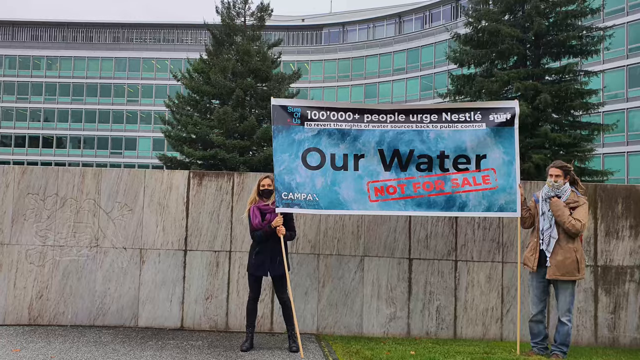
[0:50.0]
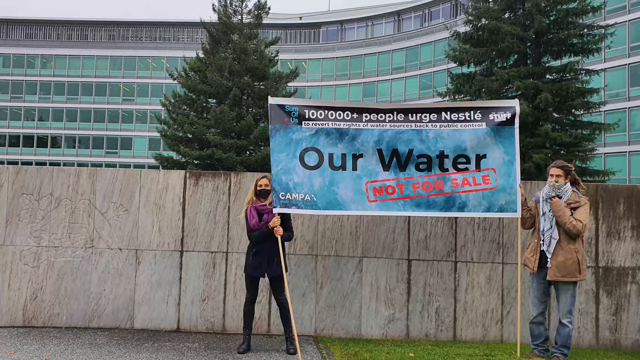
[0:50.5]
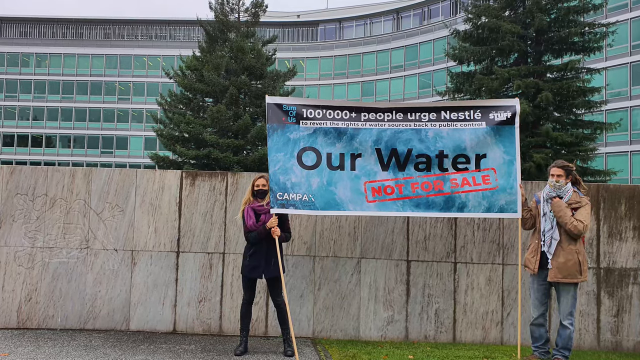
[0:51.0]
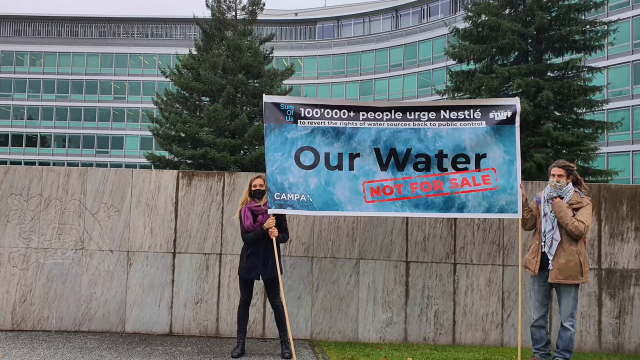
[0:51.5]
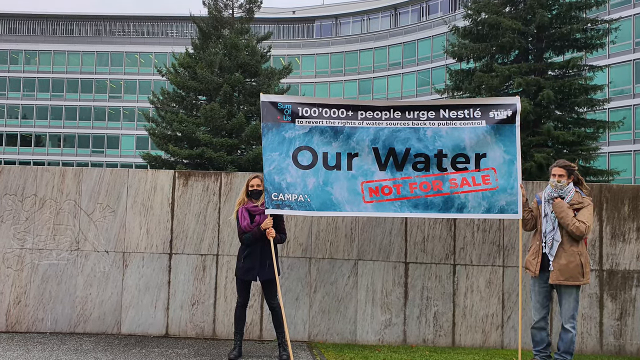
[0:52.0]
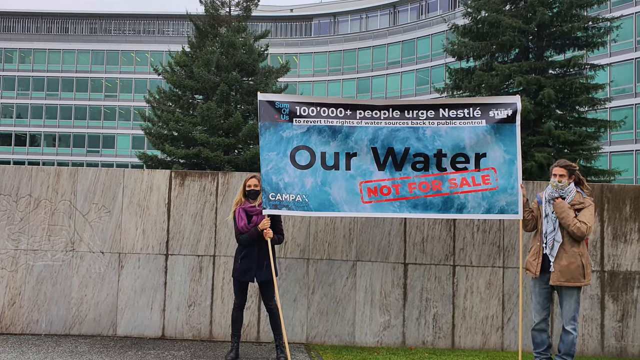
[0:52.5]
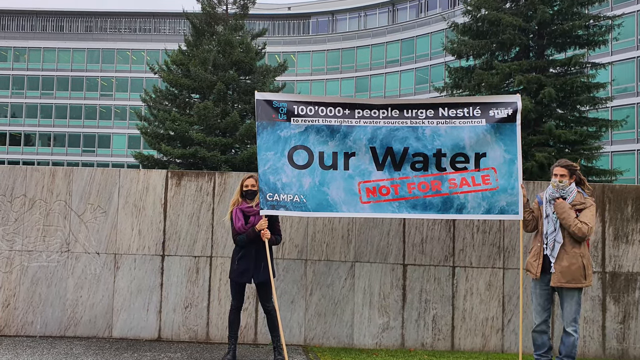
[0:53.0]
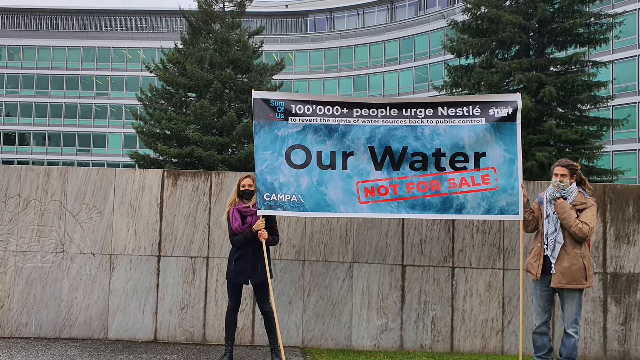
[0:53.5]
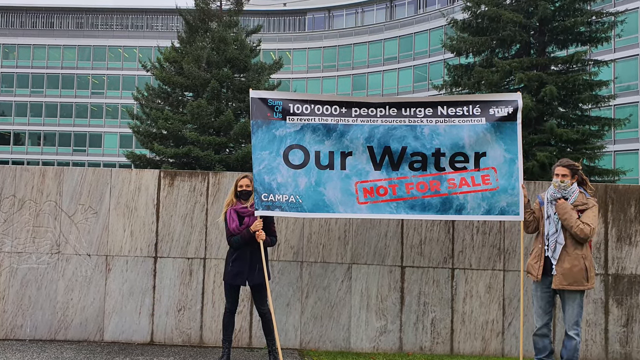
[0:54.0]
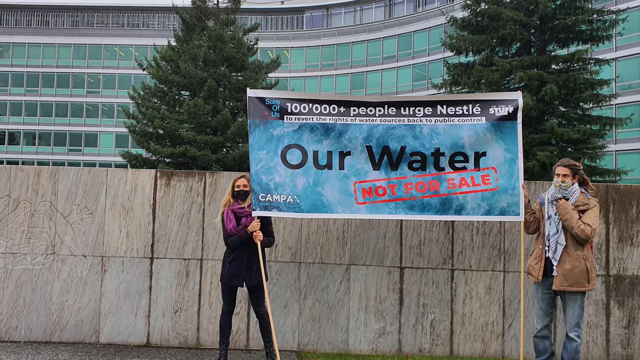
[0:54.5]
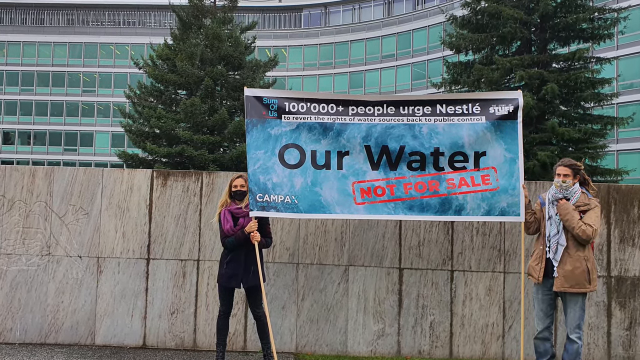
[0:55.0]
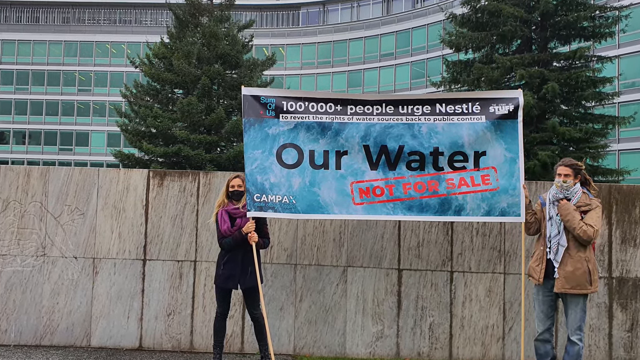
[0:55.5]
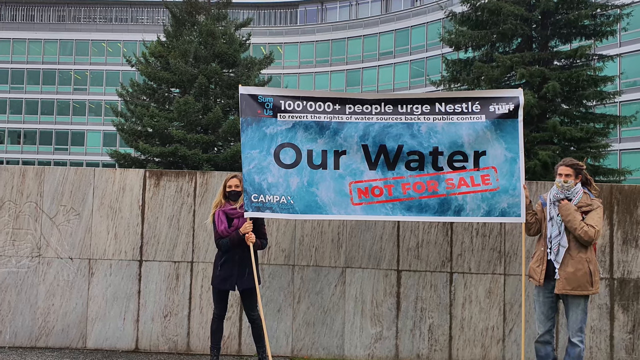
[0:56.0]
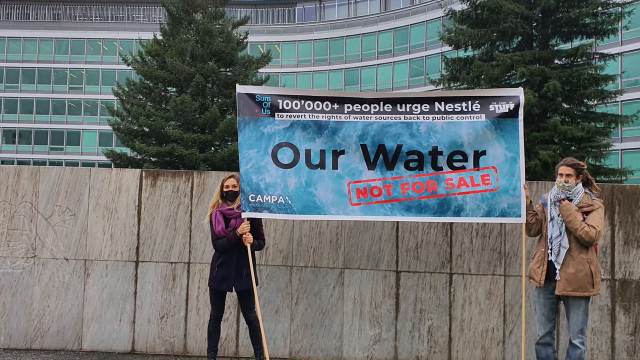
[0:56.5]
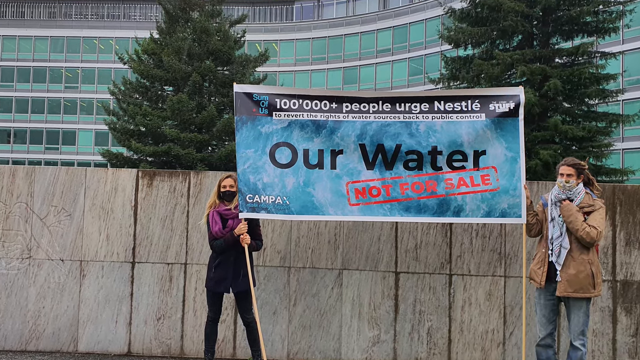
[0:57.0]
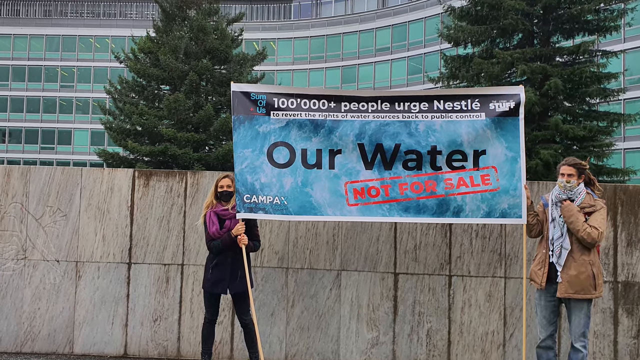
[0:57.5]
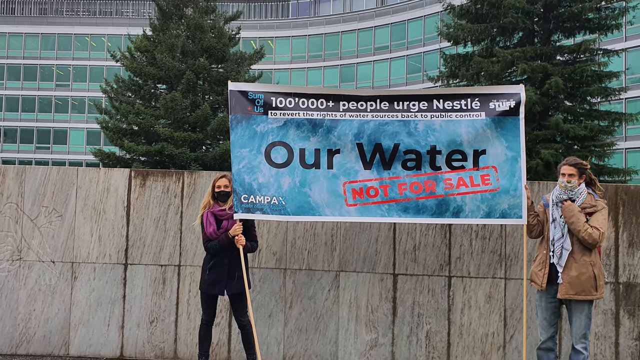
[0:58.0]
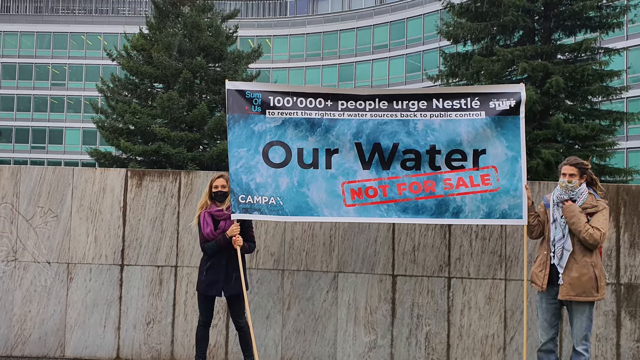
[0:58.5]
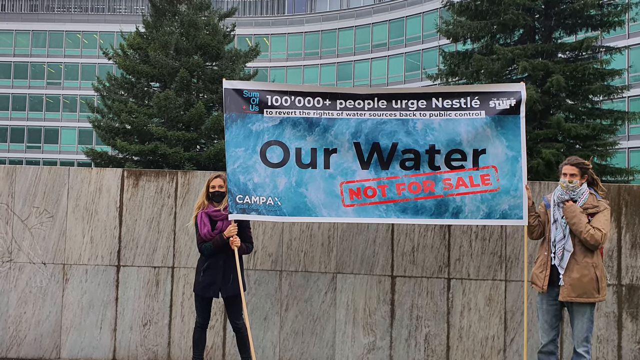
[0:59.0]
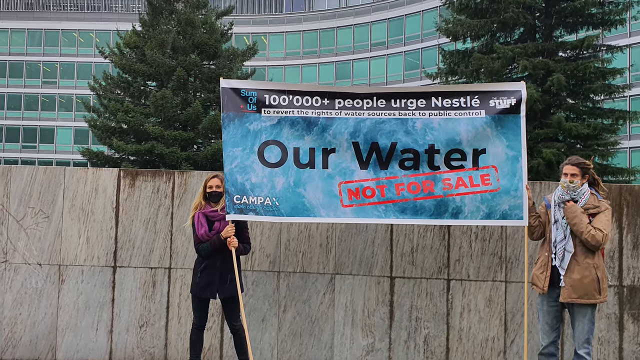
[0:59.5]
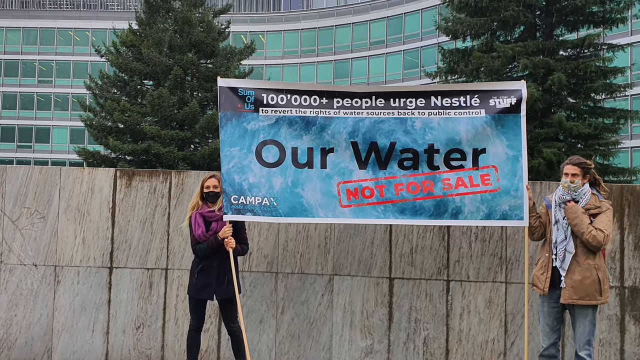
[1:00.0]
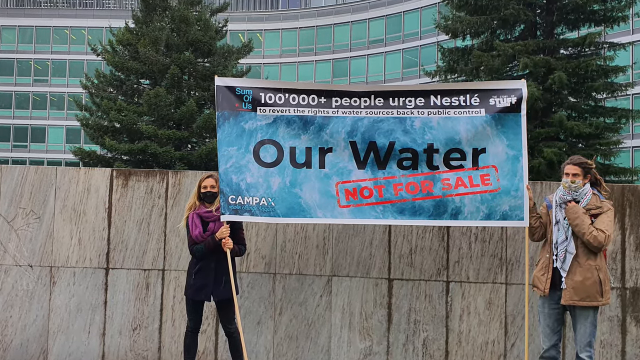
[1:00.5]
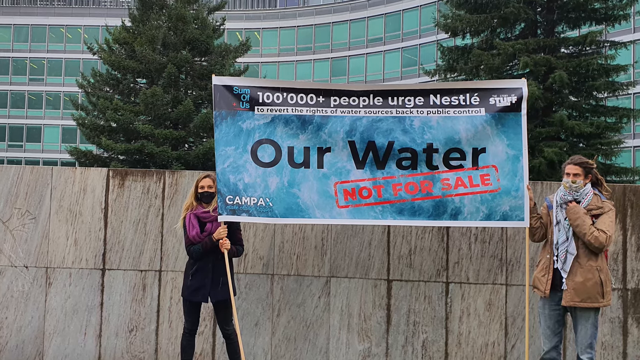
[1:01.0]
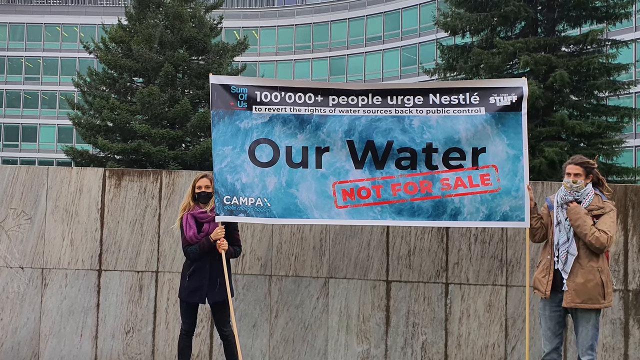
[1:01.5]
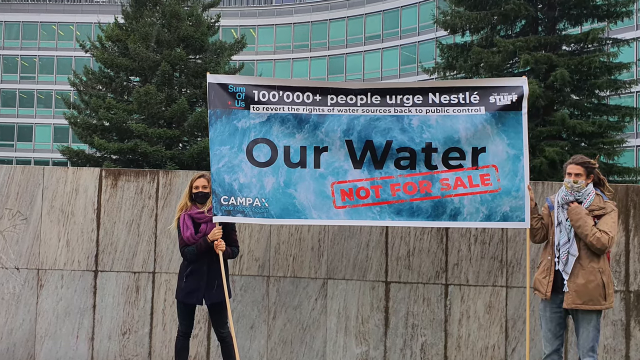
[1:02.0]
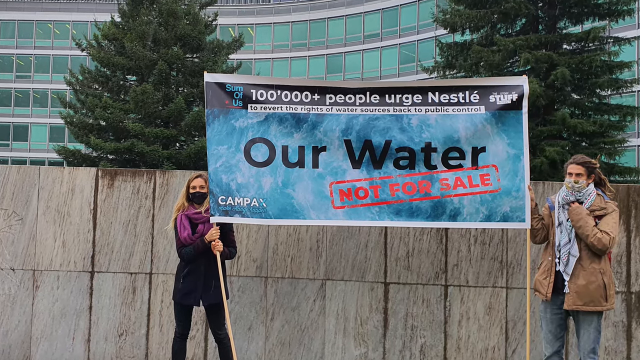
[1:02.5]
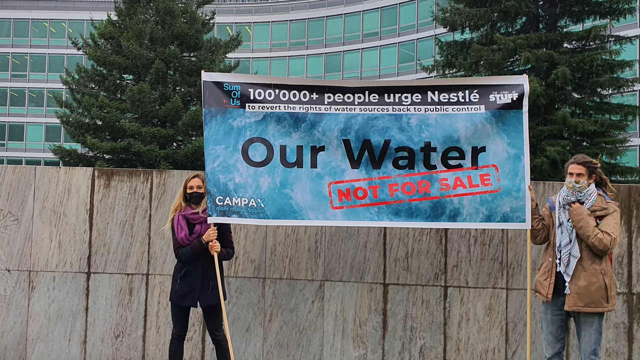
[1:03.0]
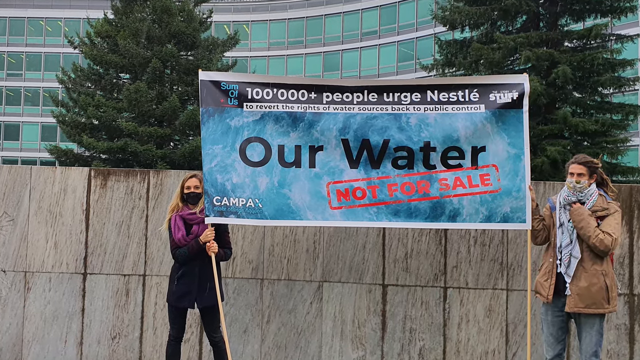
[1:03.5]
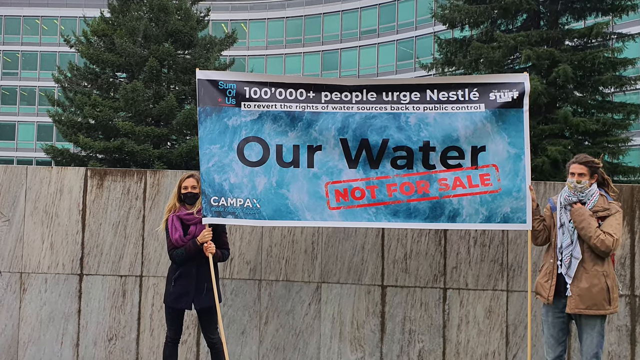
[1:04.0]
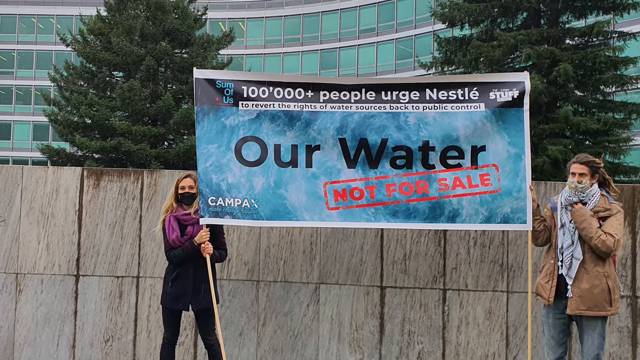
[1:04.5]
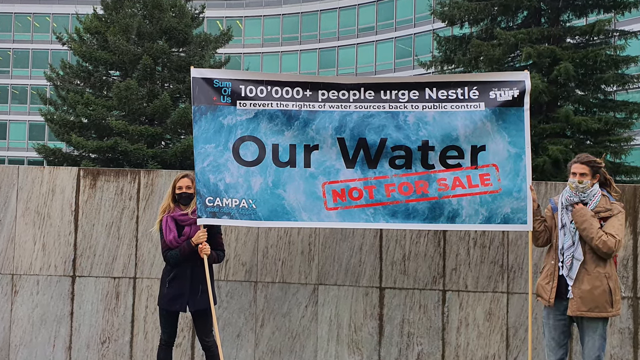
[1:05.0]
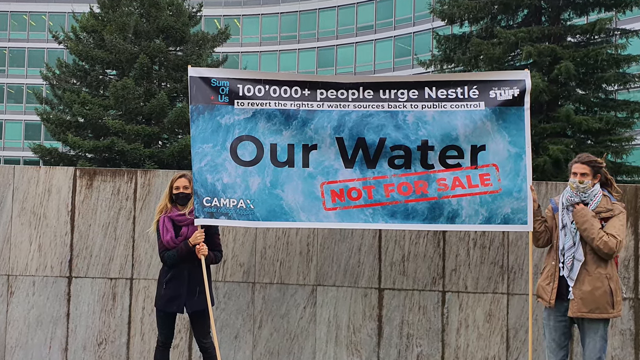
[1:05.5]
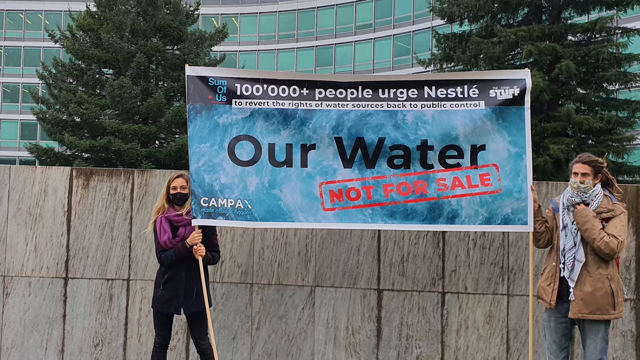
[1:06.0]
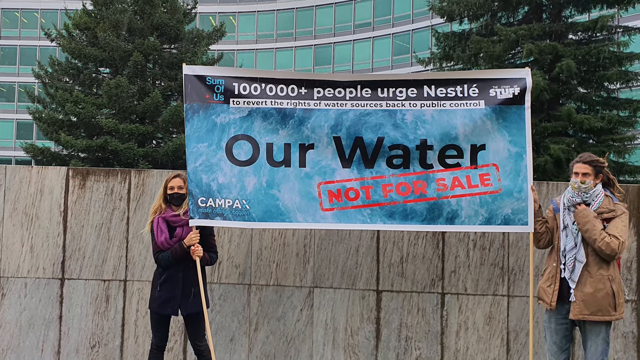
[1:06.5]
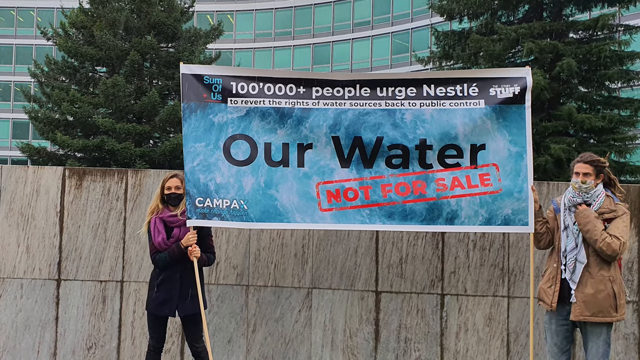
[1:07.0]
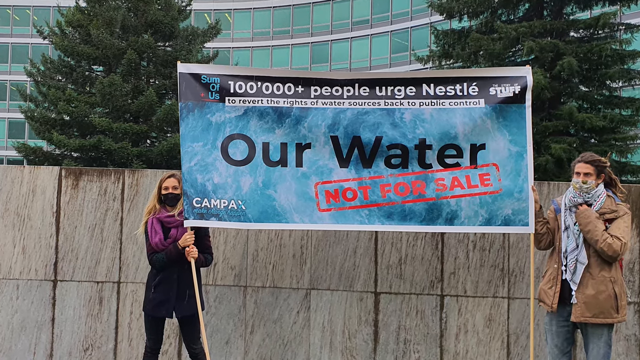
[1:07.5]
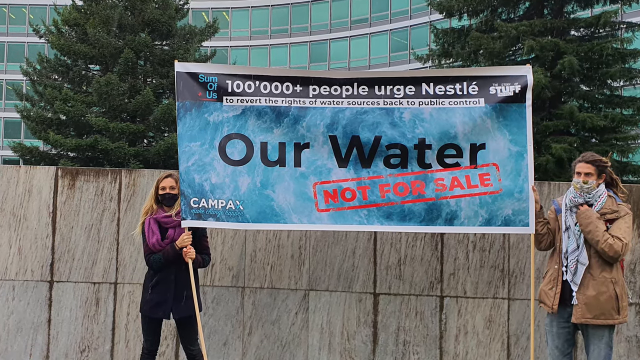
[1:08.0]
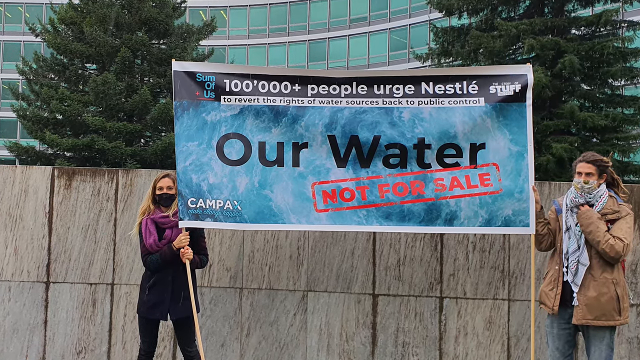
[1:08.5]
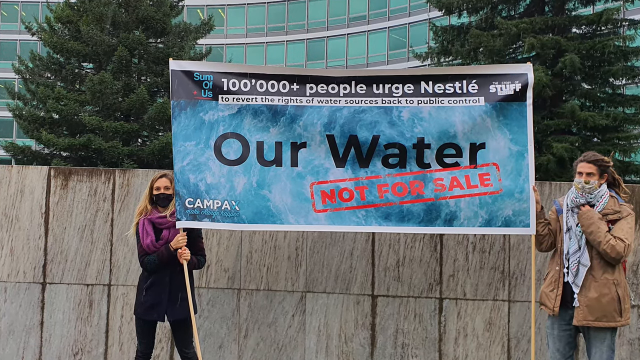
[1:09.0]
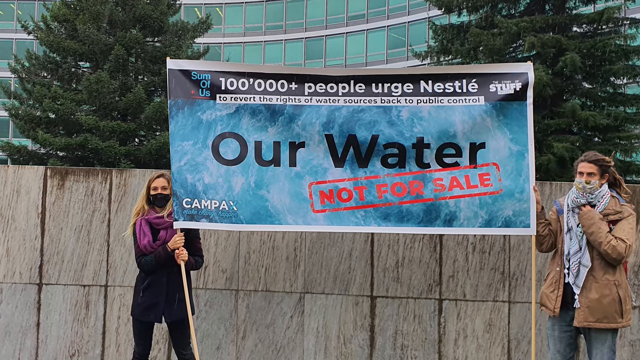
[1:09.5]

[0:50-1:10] Two people, apparently a man and a woman, stand in front of the headquarters with their faces covered: one wears a mask and the other is covered by scarves. Together they hold up a sign so big it takes two people to hold it. It reads "100,000 plus people urged Nestle to revert the rights of water sources back to the public control," with "our water" in black and "not for sale" in red. It apparently is a protest. One person looks at the camera while the other does not. The view slowly moves into a close-up, and the building is visible in the distance, with at least two trees standing behind some kind of wall.